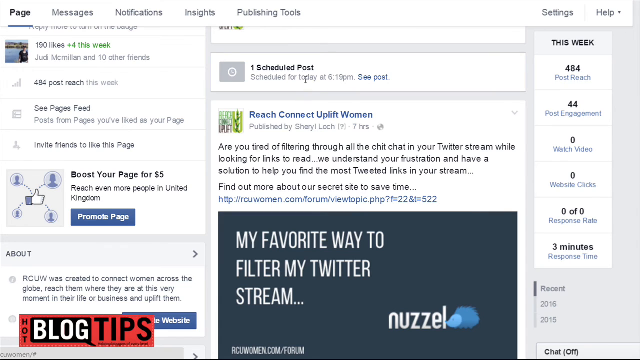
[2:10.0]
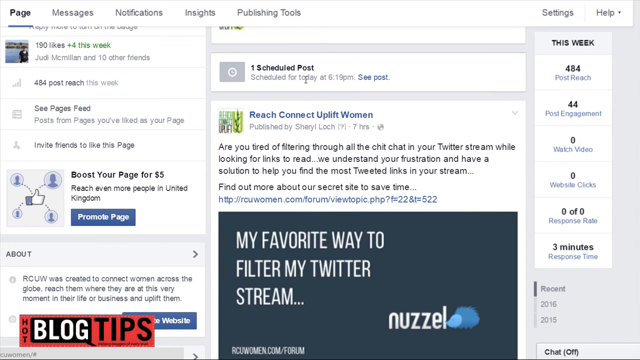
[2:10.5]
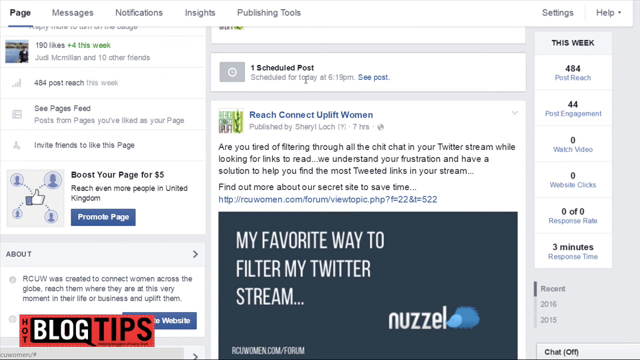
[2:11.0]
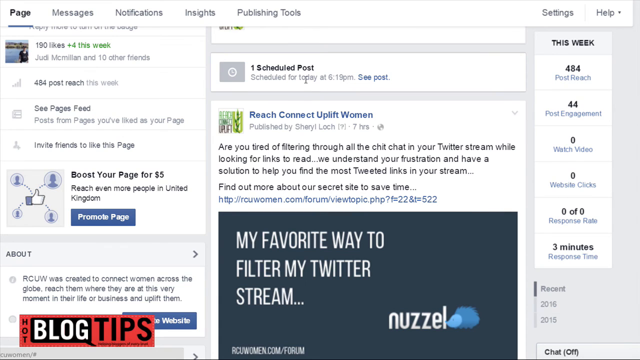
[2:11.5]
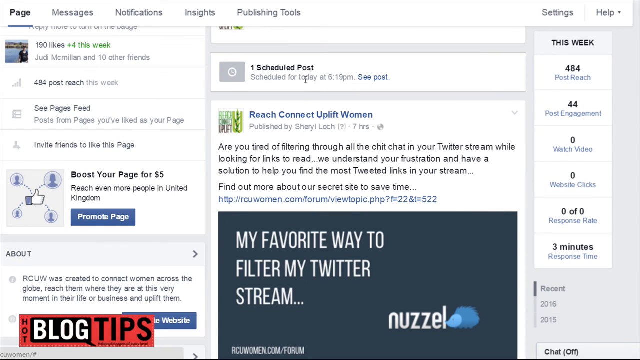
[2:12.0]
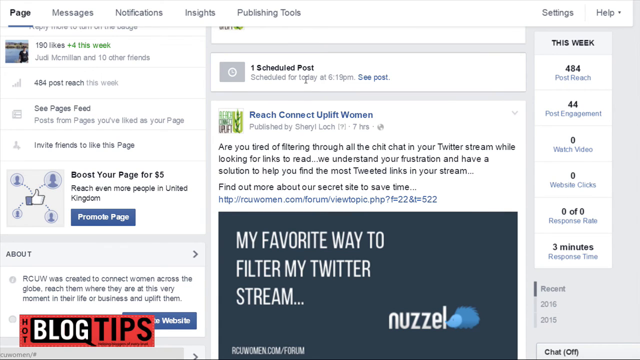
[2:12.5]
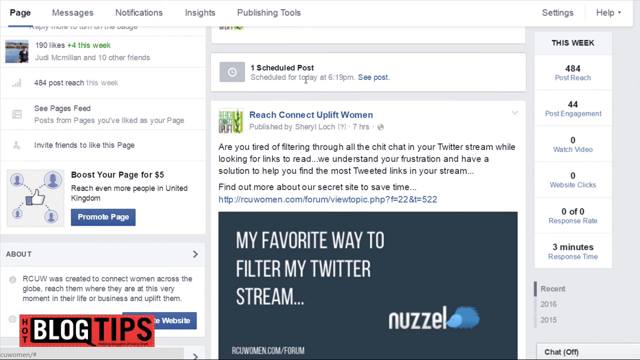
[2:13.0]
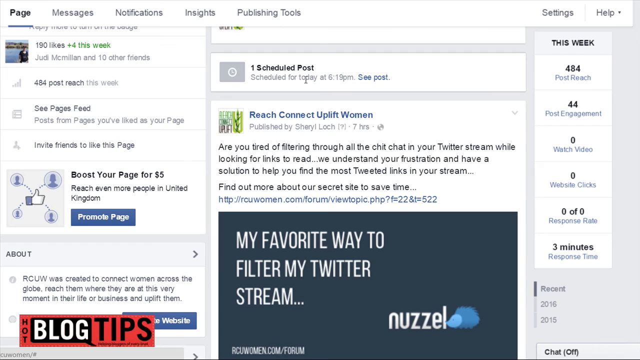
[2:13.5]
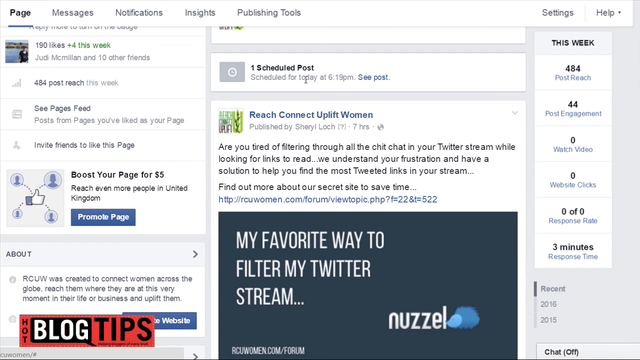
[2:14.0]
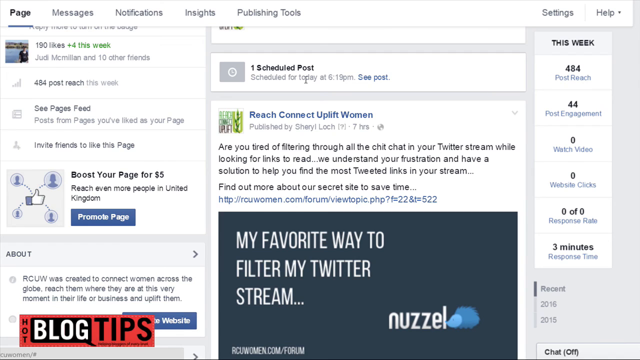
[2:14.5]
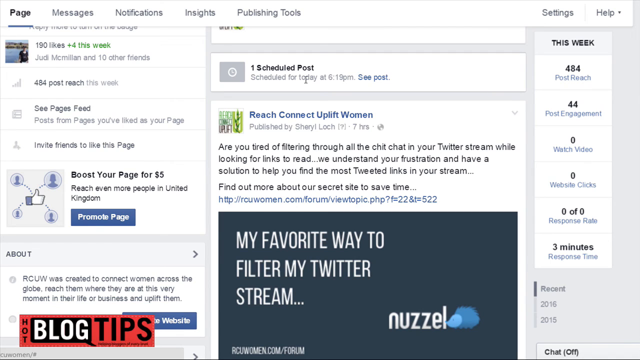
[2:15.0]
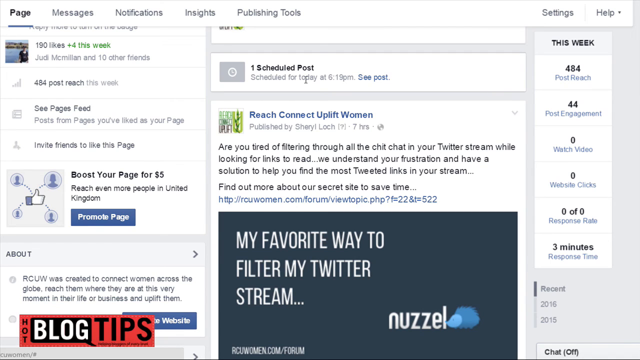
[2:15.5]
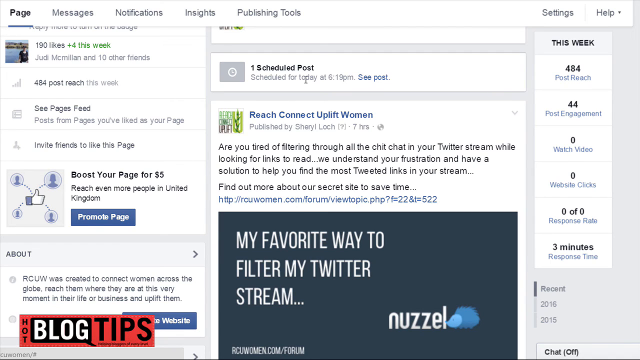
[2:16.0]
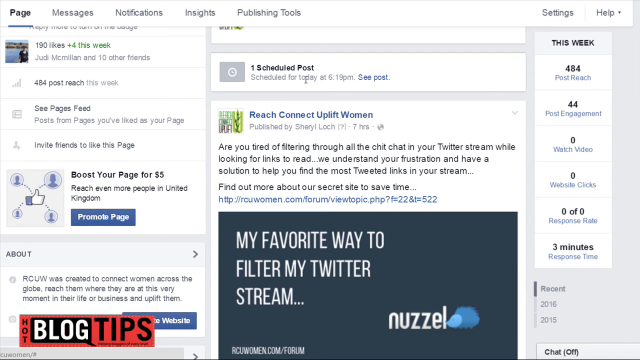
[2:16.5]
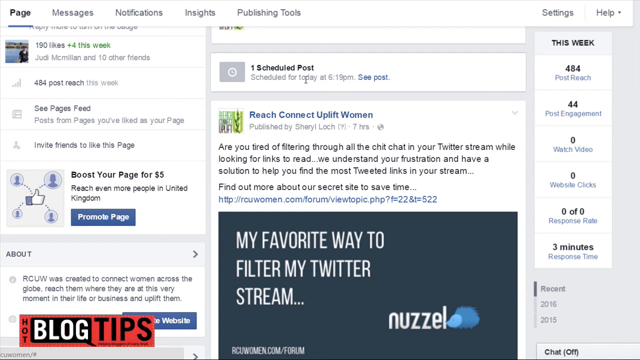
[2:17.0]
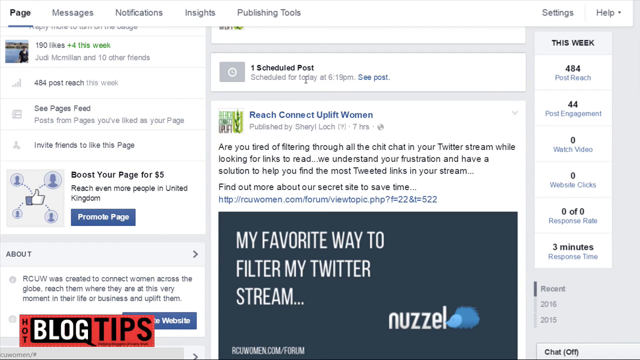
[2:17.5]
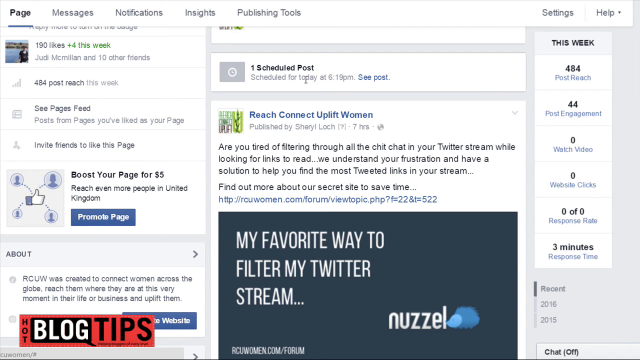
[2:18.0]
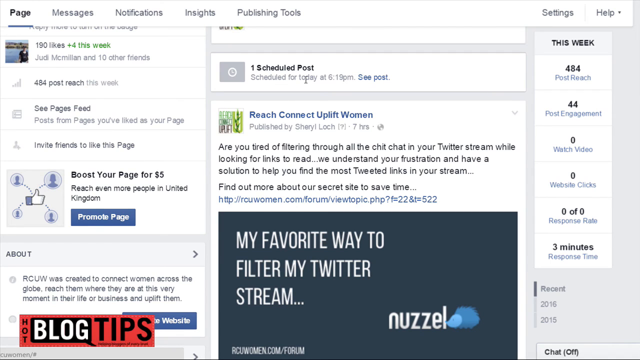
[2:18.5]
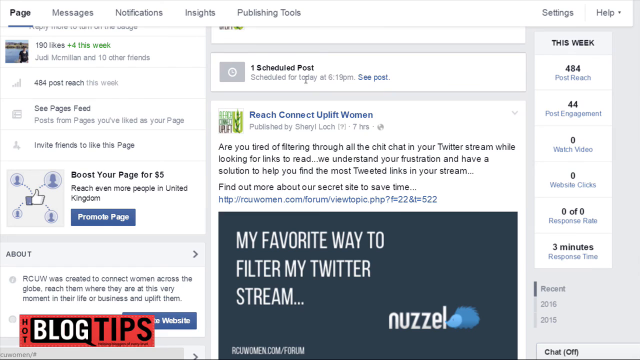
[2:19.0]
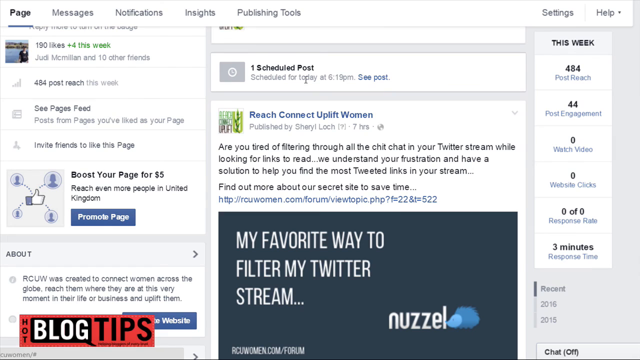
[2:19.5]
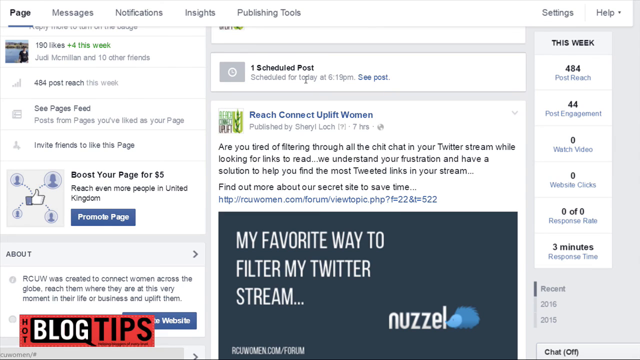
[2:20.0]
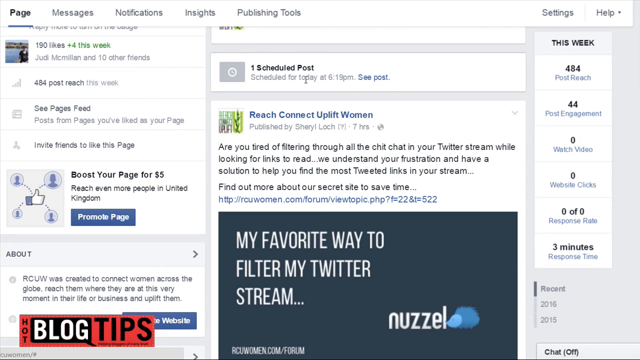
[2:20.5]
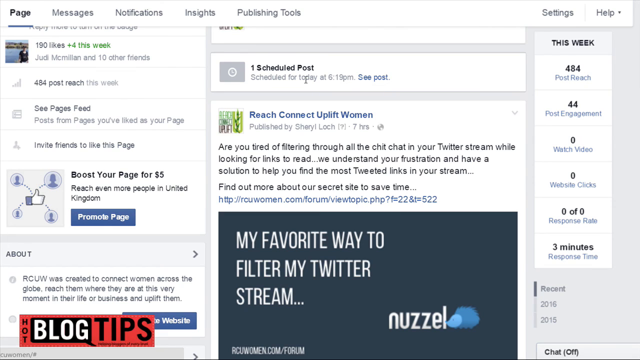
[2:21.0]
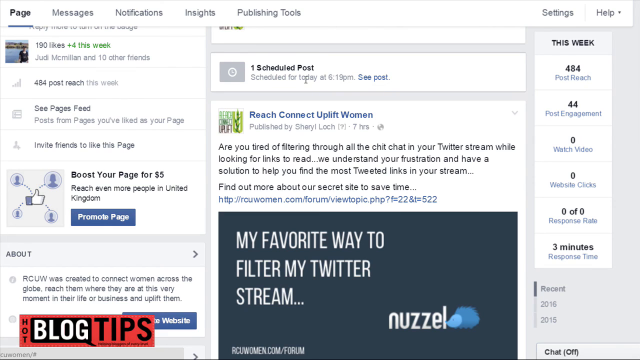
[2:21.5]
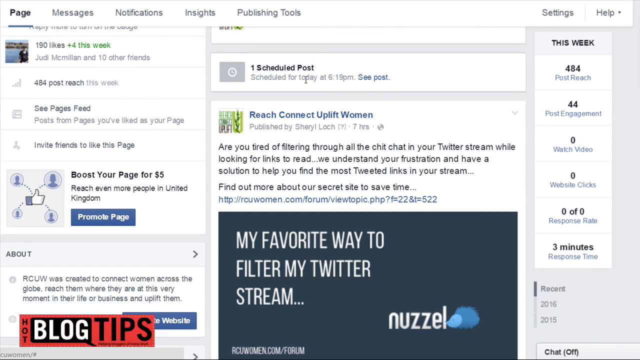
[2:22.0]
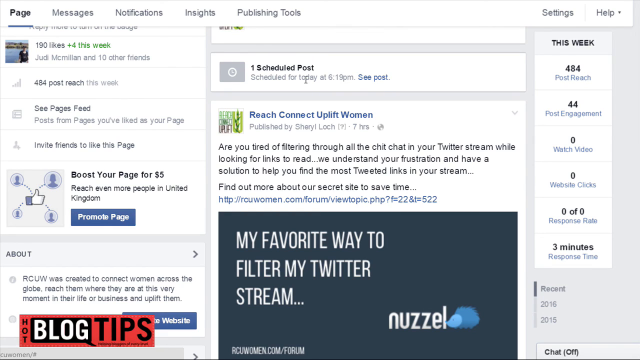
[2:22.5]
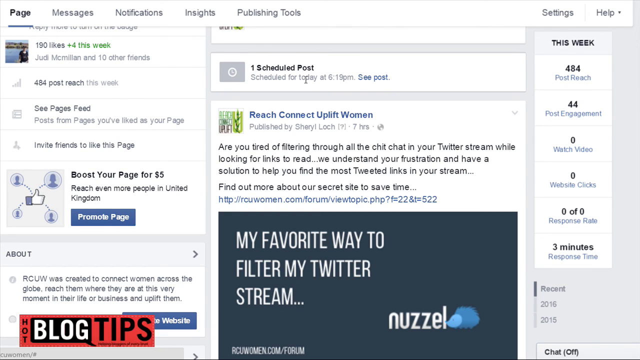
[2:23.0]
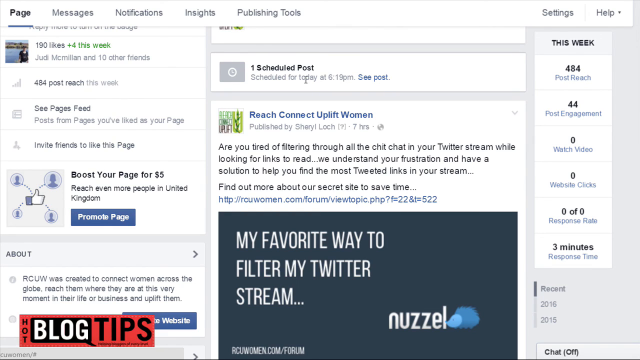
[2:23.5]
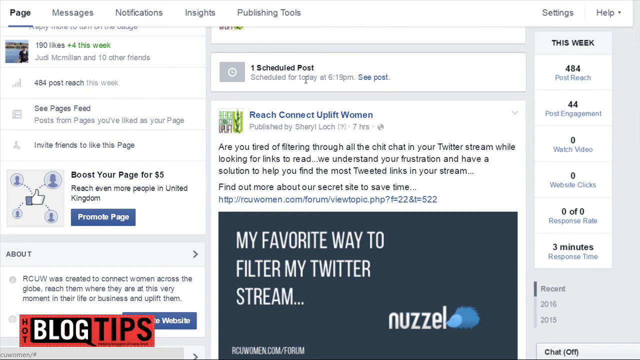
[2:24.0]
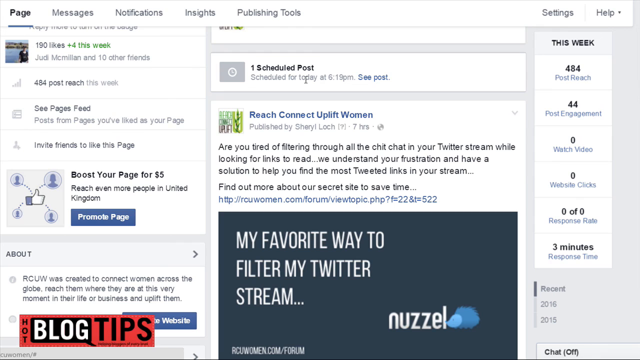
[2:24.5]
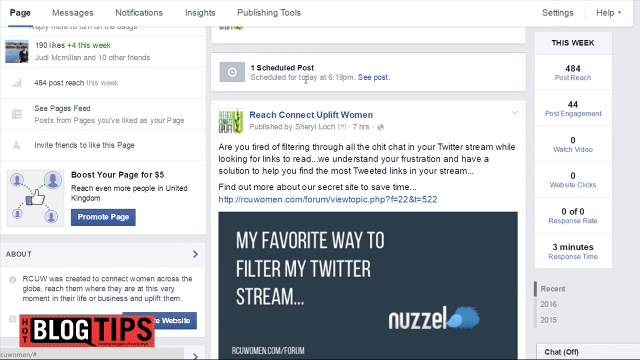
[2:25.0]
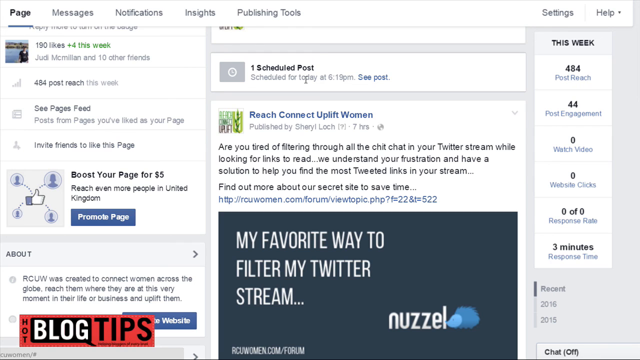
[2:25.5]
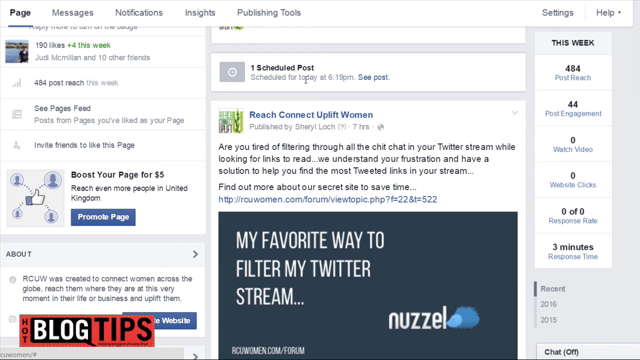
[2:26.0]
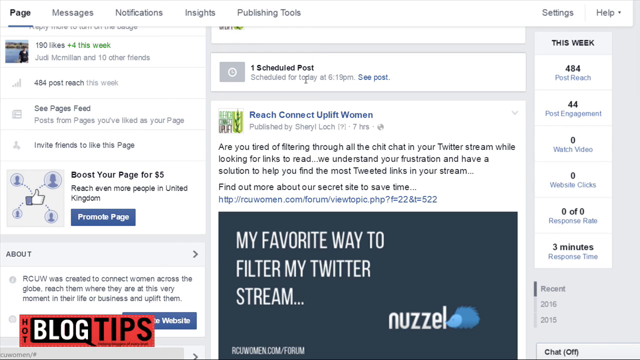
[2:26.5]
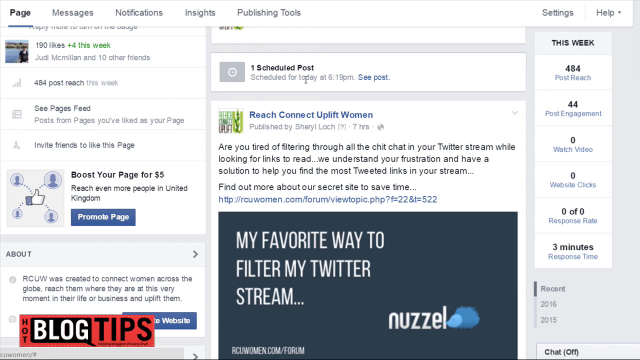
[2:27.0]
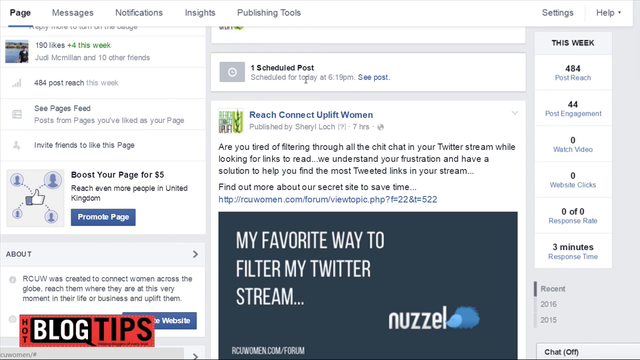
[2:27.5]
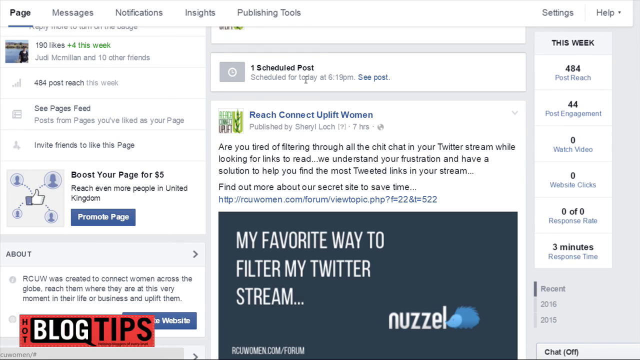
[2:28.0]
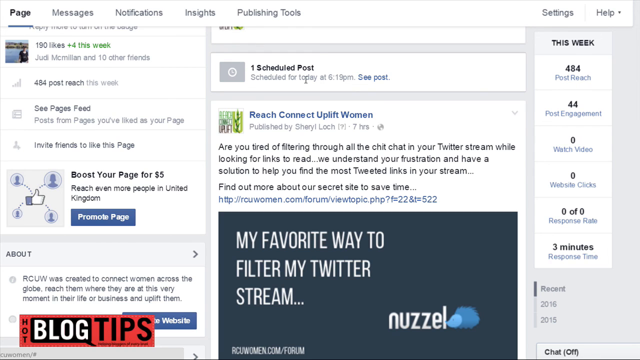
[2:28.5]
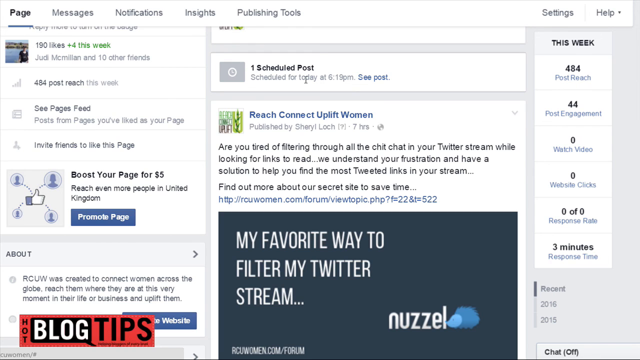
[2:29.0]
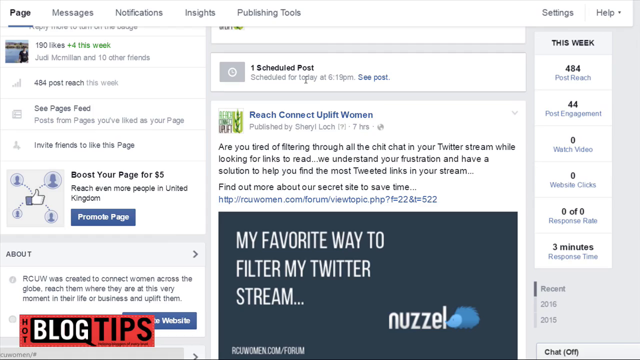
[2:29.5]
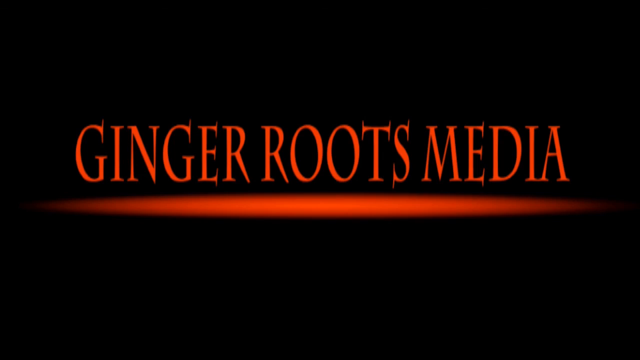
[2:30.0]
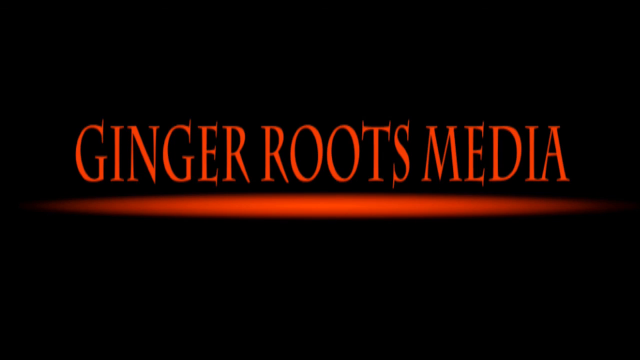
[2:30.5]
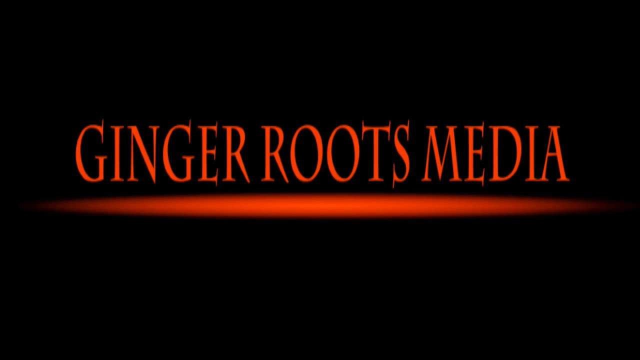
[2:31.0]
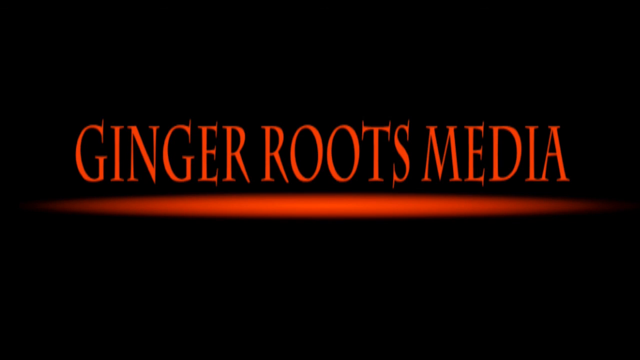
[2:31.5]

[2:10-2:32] The user is on the home page of their social media feed, which looks like it might be the main feed for a business they are probably running. The page is not moving, showing information and social media posts.